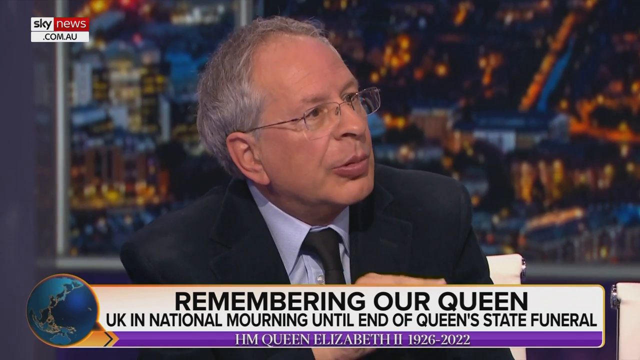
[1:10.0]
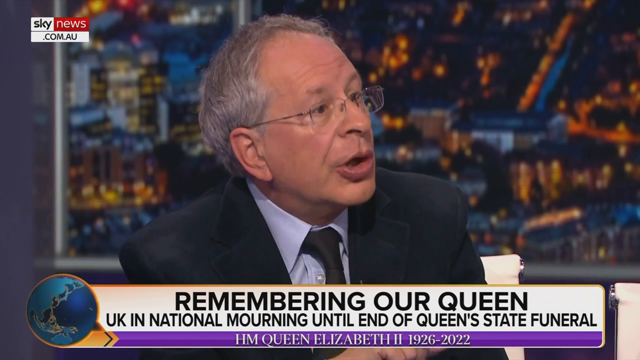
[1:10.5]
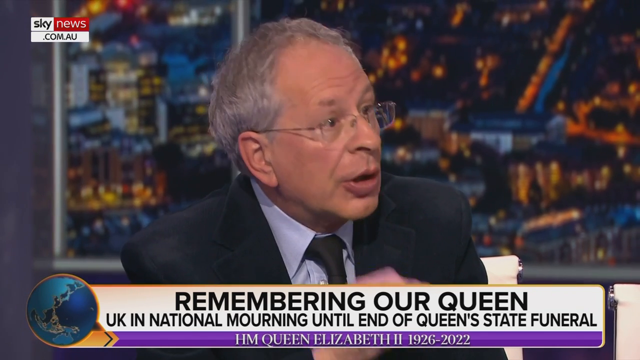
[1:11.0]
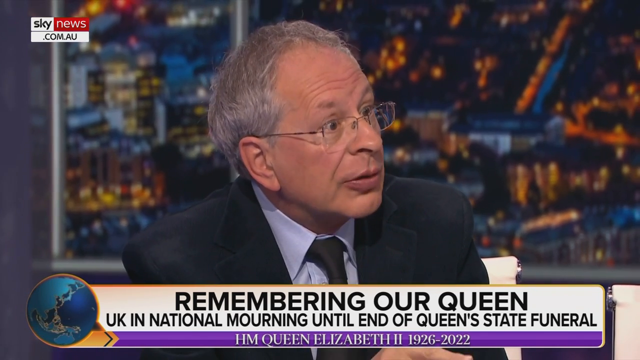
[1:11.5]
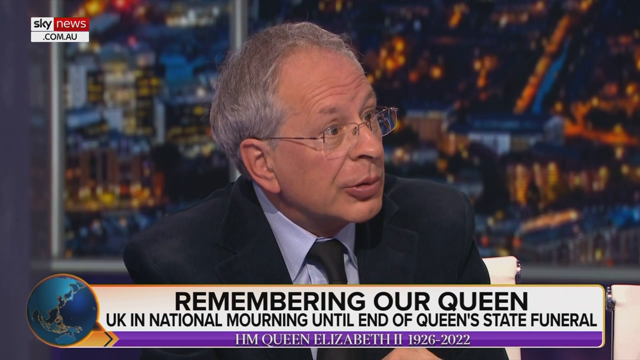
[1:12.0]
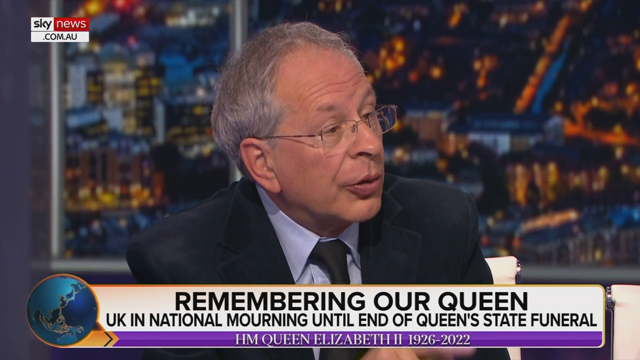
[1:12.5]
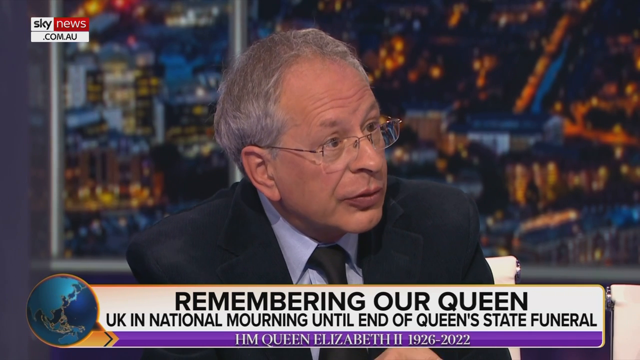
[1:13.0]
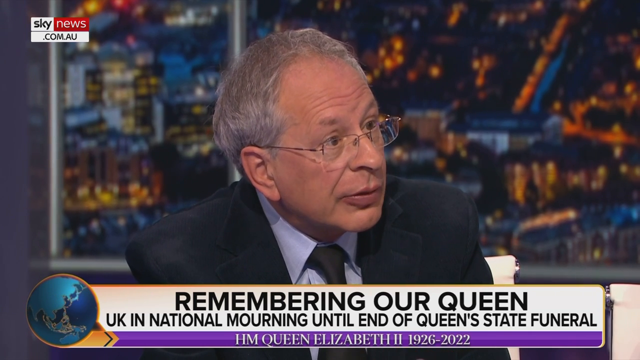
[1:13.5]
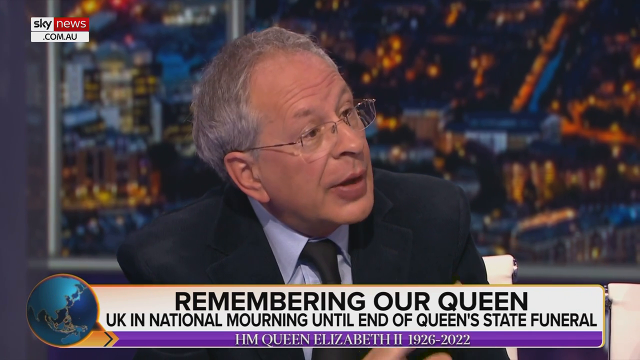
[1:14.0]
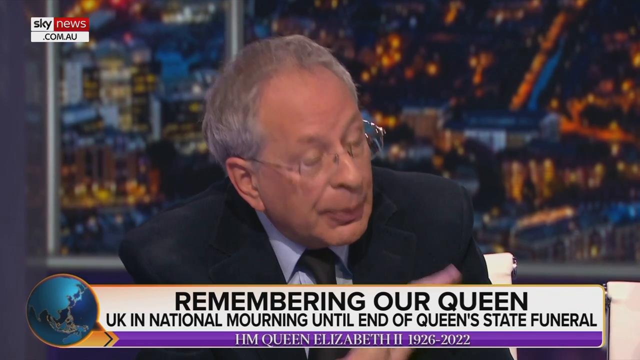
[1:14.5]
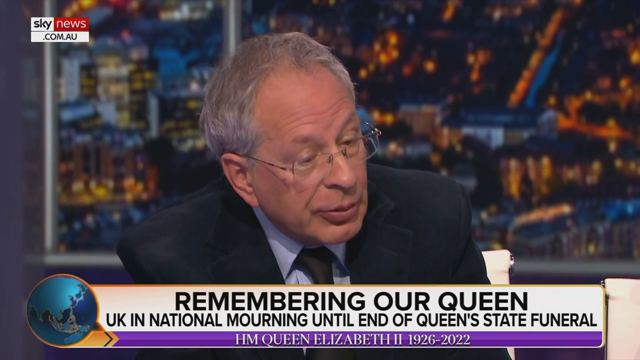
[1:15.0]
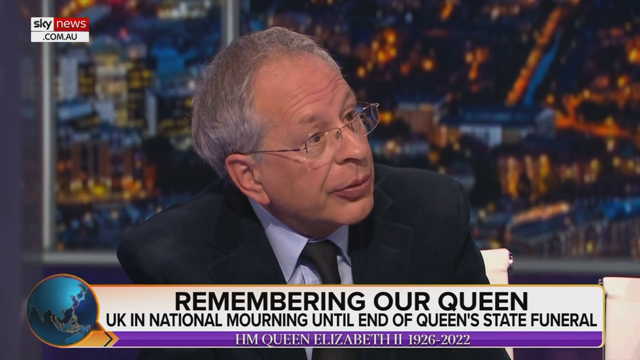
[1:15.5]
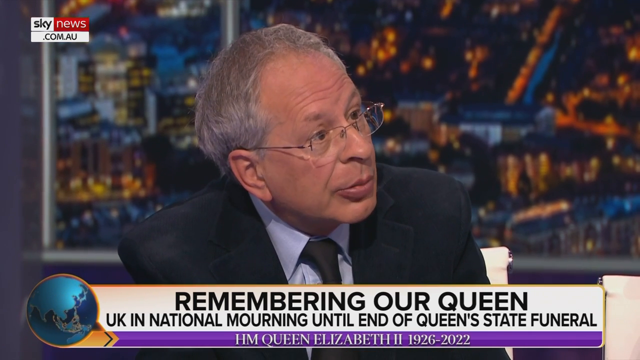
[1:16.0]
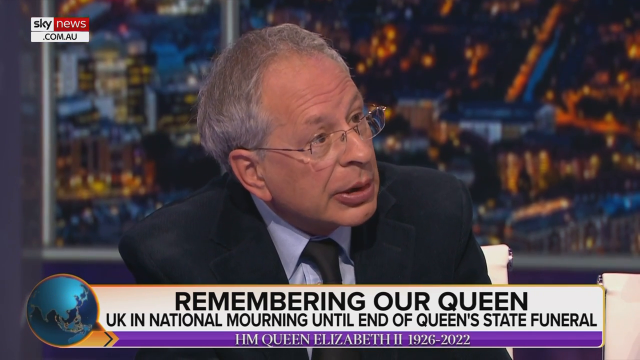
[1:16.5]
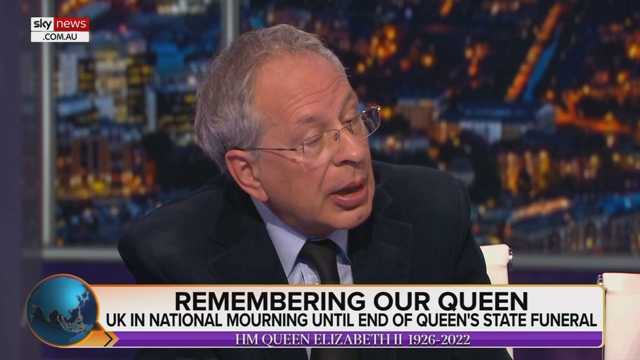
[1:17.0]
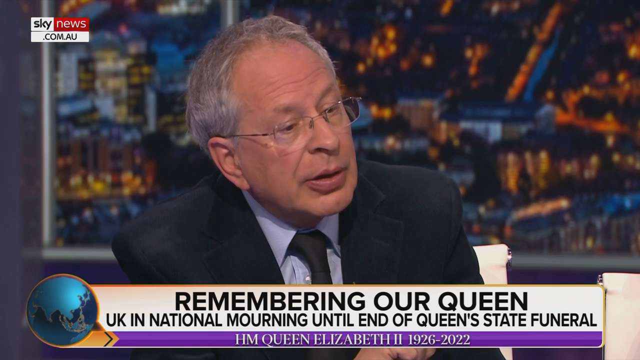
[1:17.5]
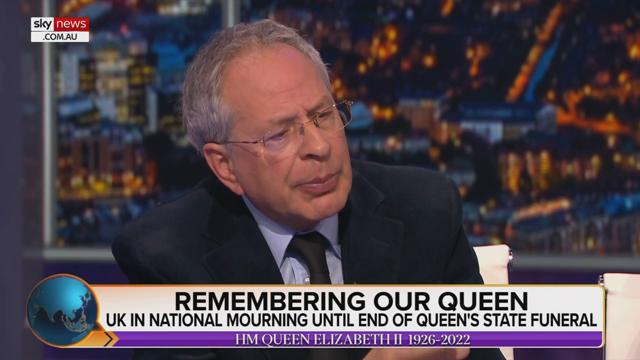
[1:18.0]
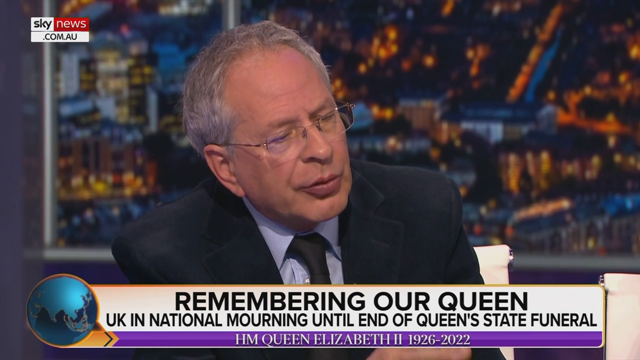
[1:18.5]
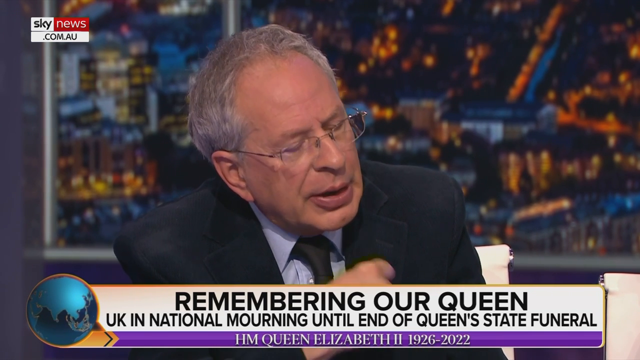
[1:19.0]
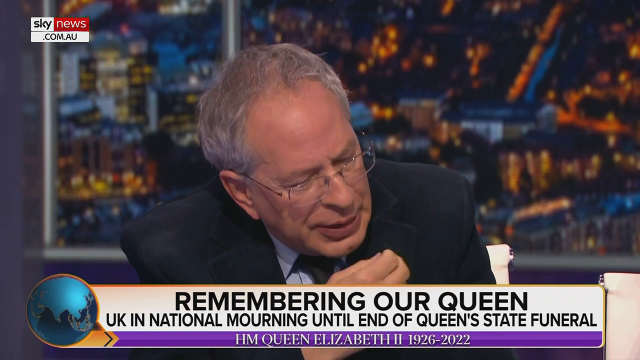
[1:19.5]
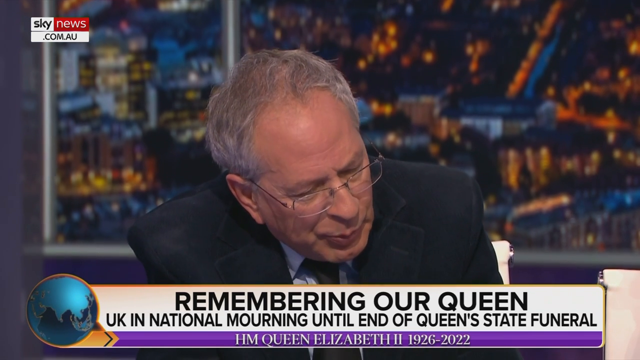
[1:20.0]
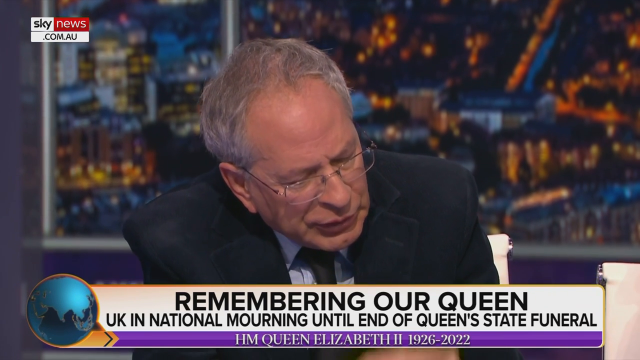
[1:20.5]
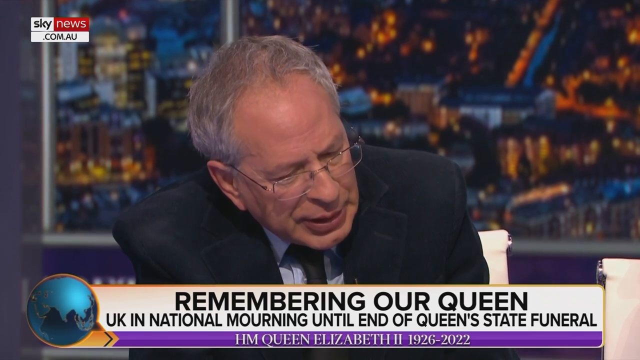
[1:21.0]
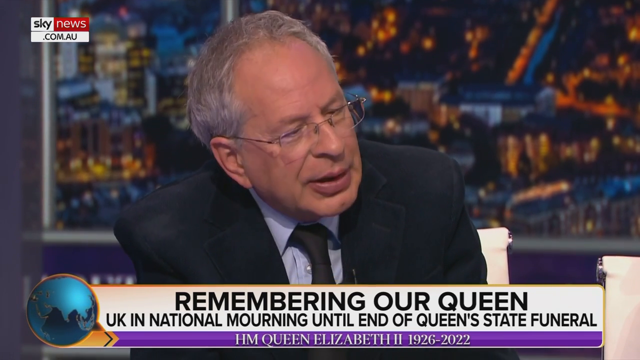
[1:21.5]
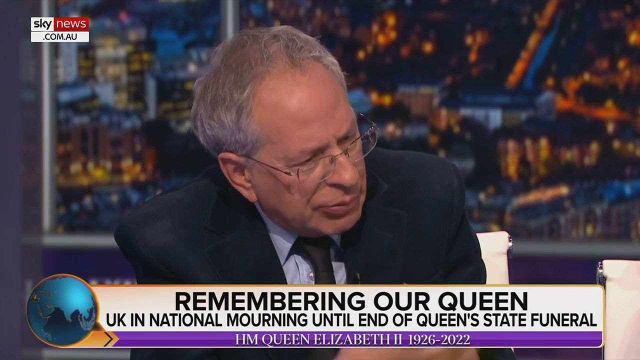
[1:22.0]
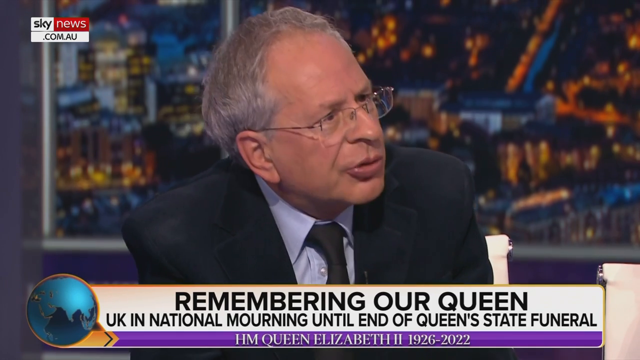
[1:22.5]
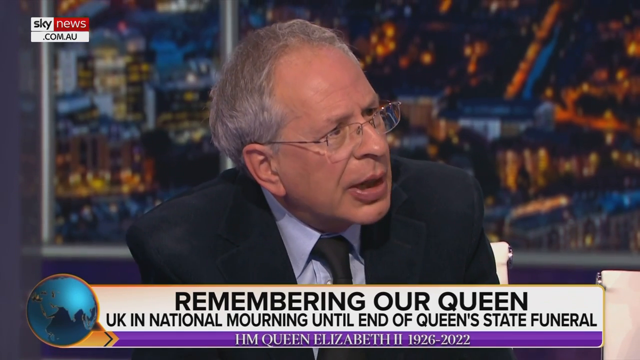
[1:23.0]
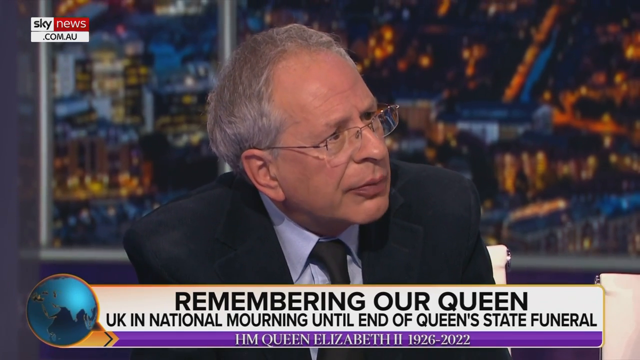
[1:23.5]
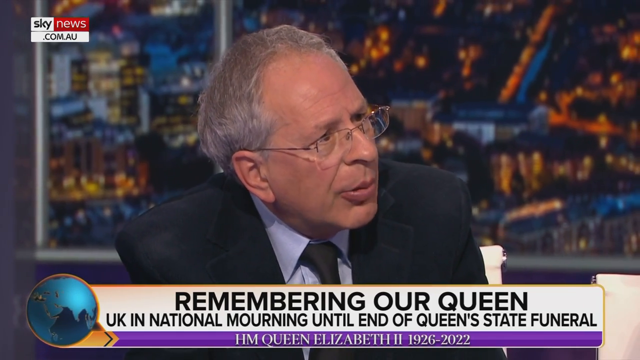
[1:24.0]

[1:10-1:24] Morgan speaks to an older gentleman who wears glasses and a black suit with a light blue dress shirt underneath. The man appears to be Caucasian and speaks to his left. A little of his chair is visible, with a backrest of a white-like color. The background is again a cityscape at night. He appears to be speaking, maybe answering a question from Piers Morgan, and uses his right hand to emote. Very briefly at the very end, the panelist next to him is visible; she appears to be a Caucasian woman with short, curly black hair.